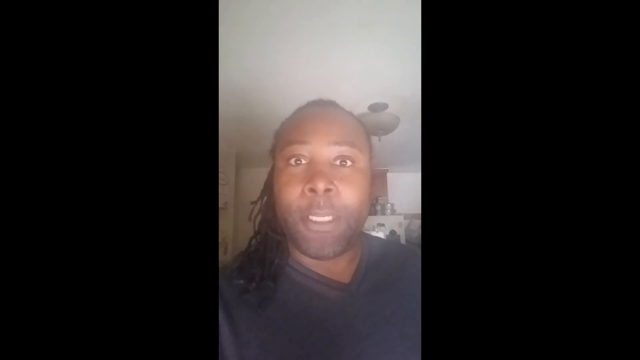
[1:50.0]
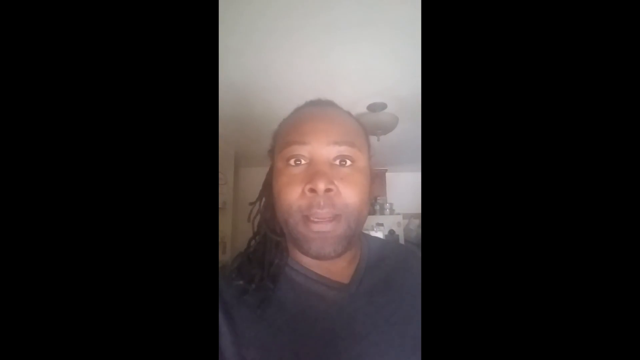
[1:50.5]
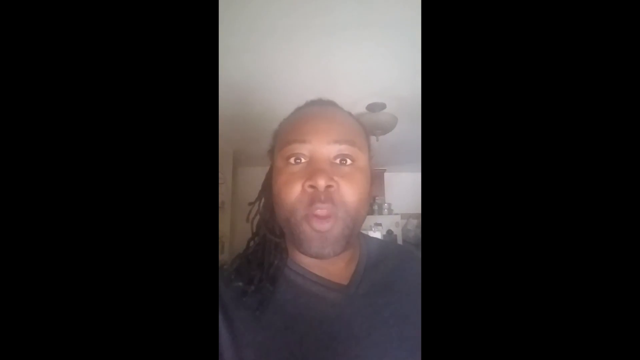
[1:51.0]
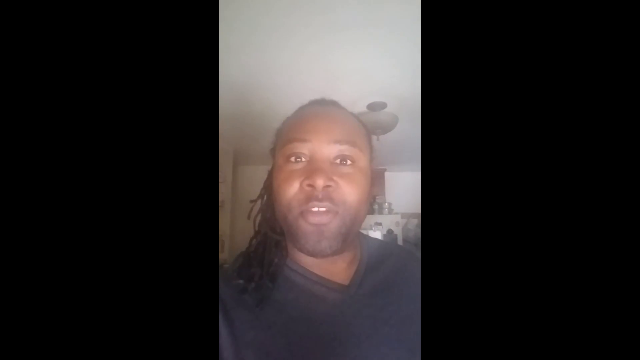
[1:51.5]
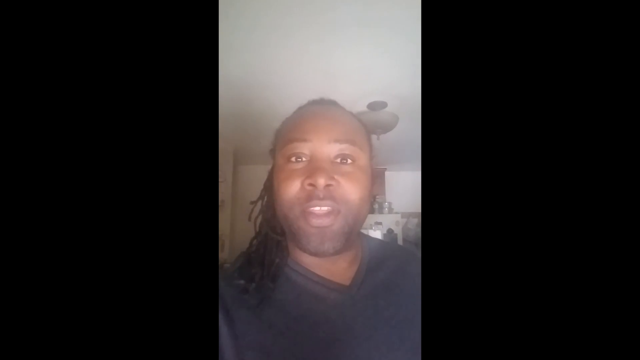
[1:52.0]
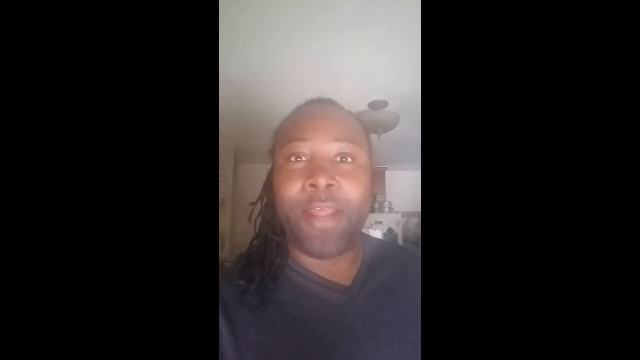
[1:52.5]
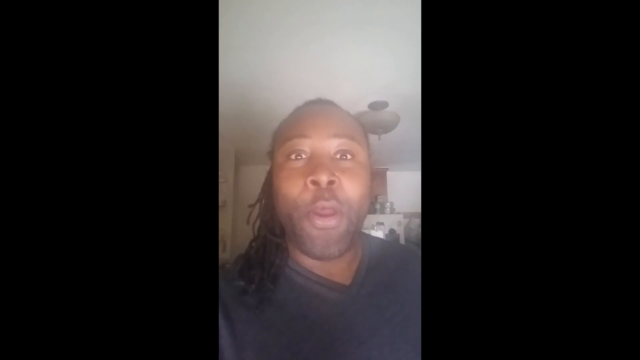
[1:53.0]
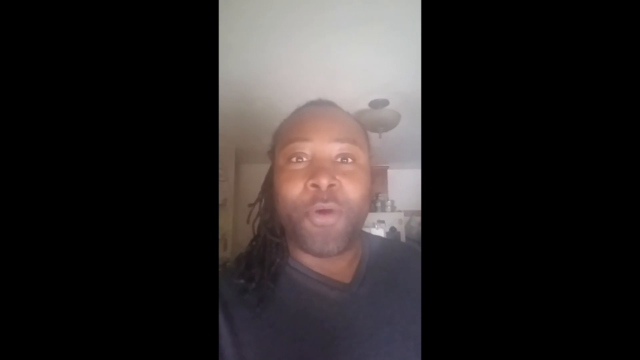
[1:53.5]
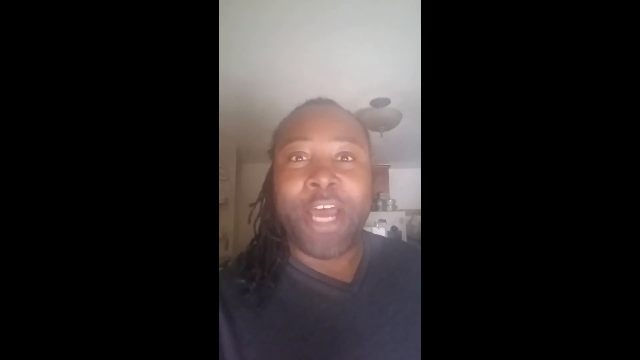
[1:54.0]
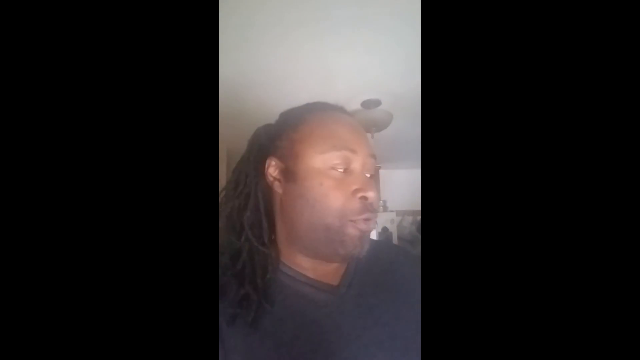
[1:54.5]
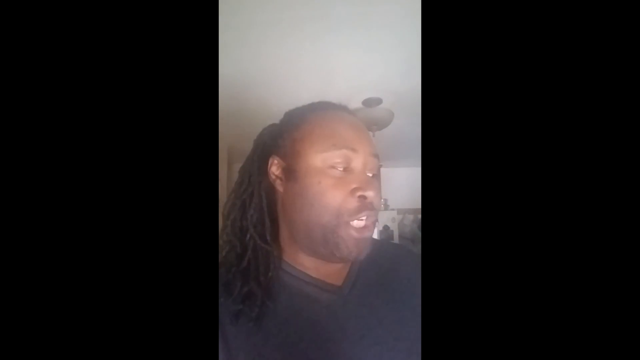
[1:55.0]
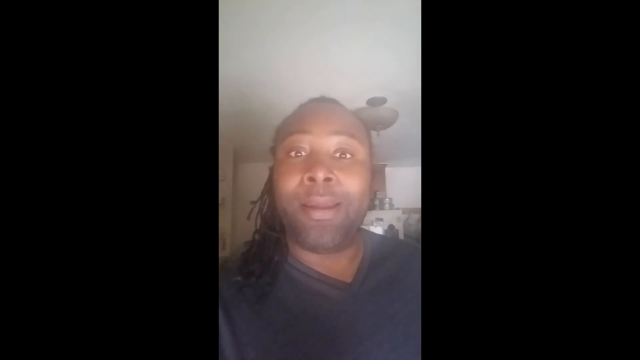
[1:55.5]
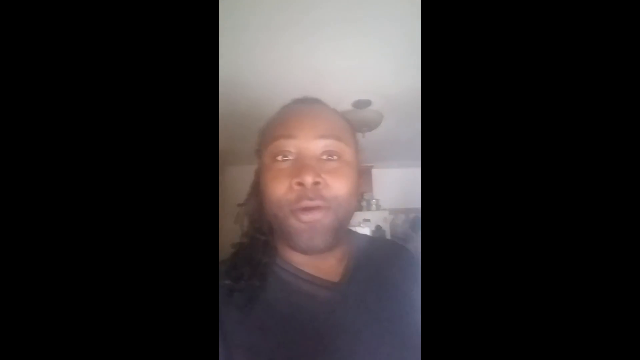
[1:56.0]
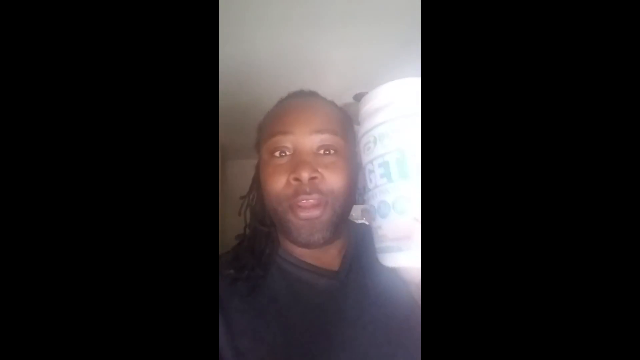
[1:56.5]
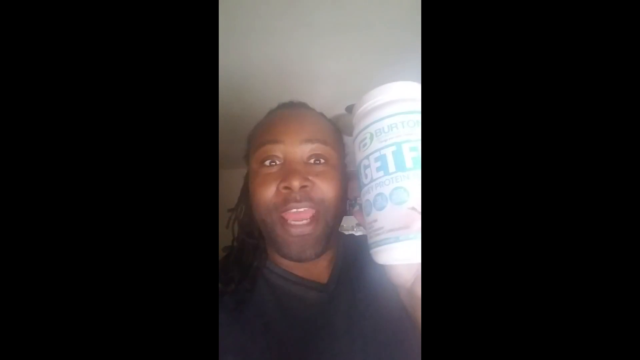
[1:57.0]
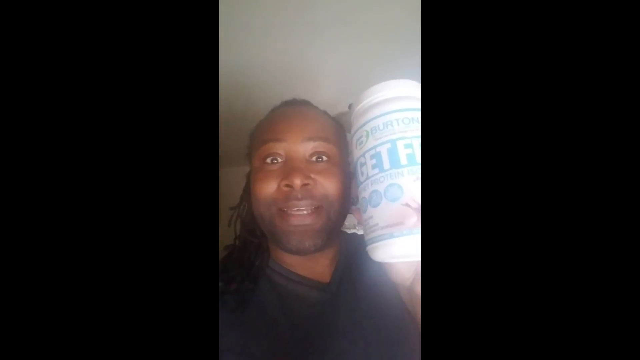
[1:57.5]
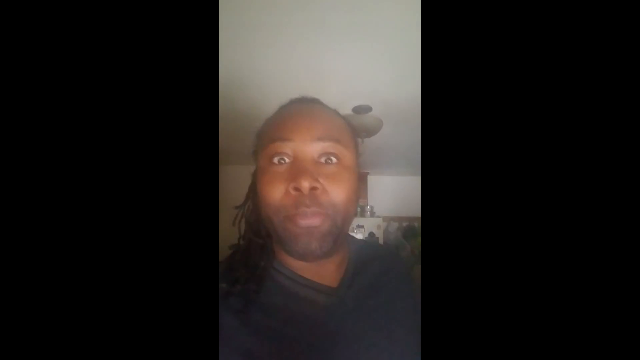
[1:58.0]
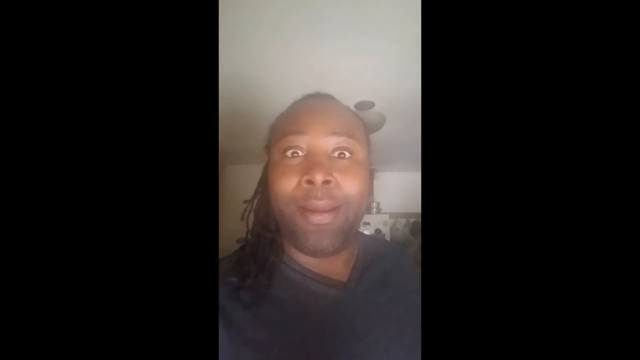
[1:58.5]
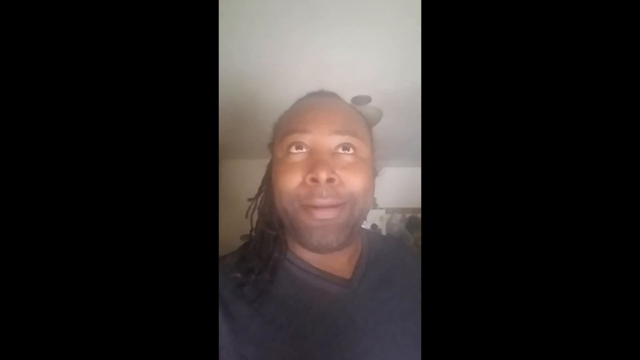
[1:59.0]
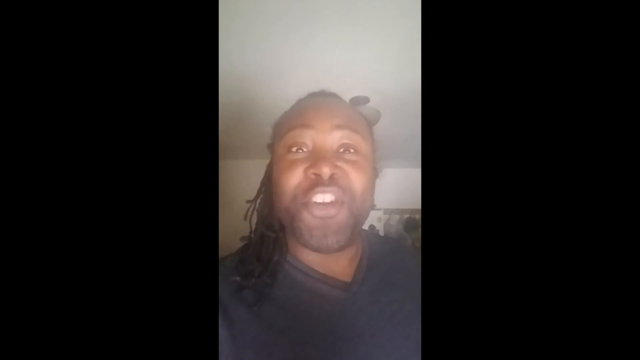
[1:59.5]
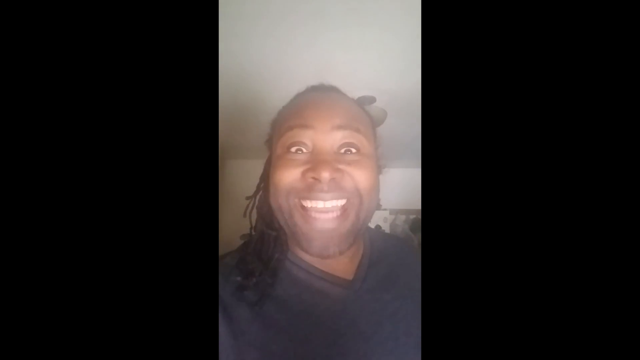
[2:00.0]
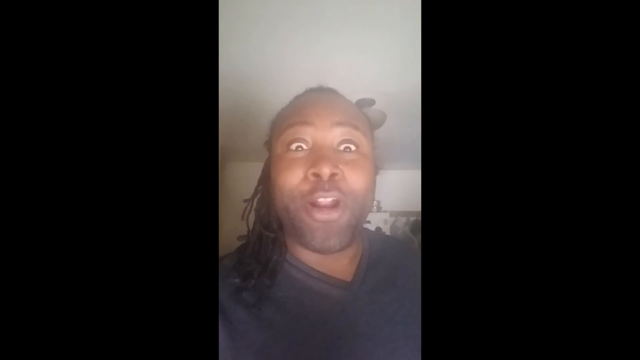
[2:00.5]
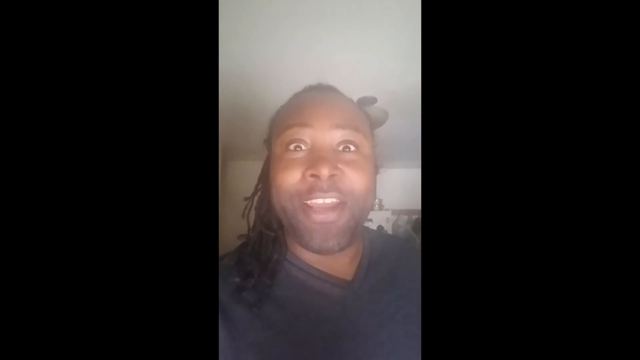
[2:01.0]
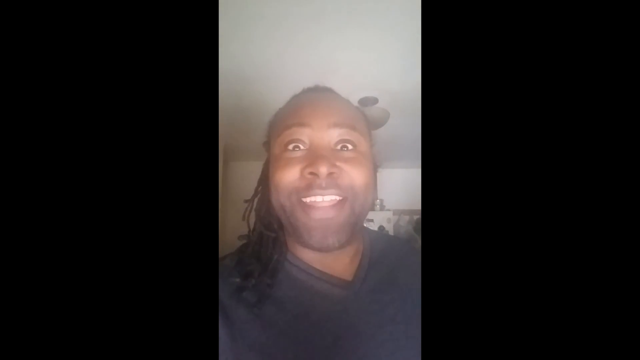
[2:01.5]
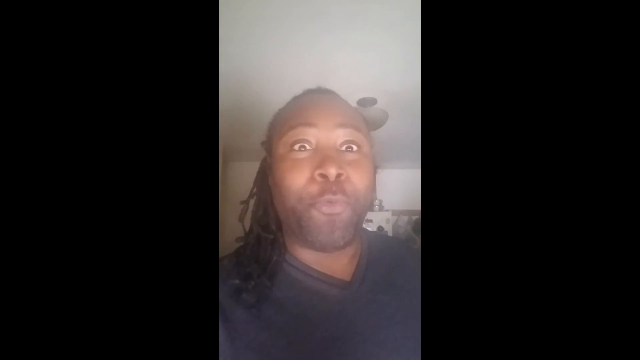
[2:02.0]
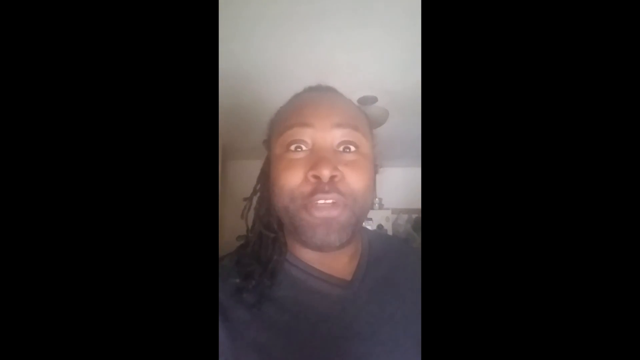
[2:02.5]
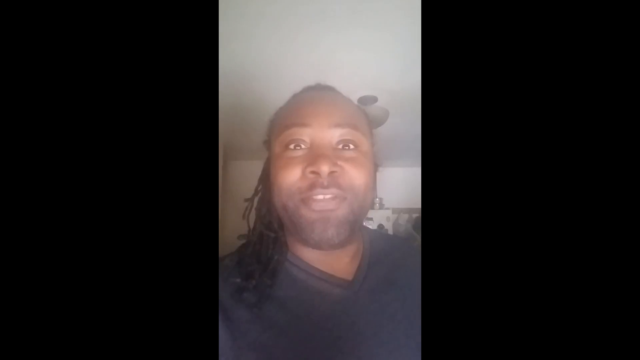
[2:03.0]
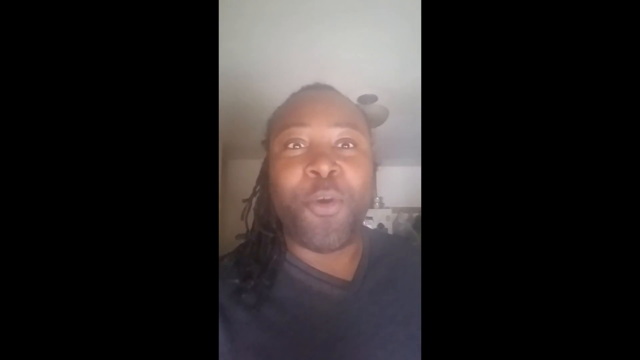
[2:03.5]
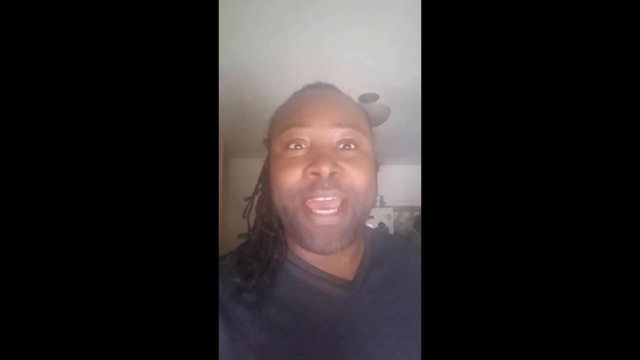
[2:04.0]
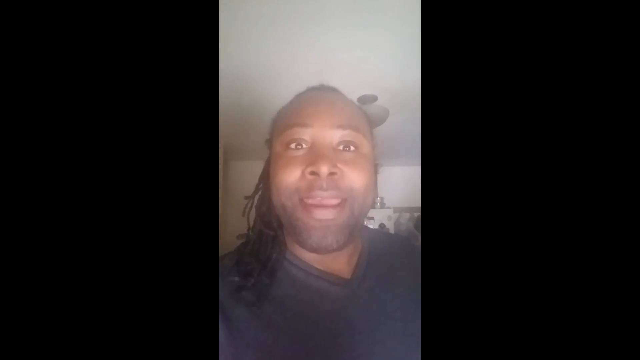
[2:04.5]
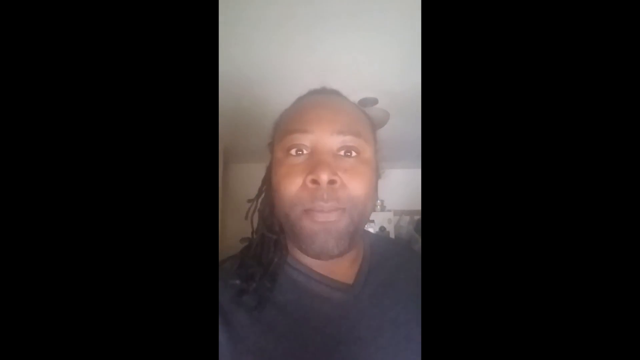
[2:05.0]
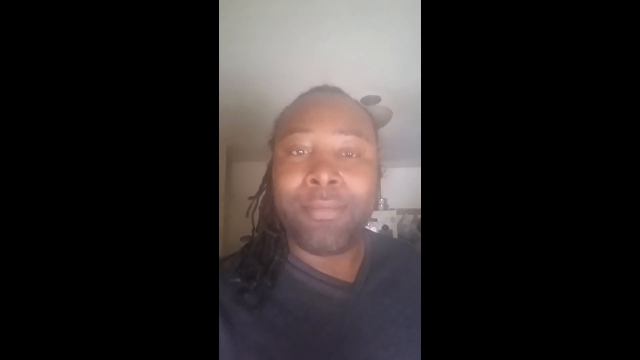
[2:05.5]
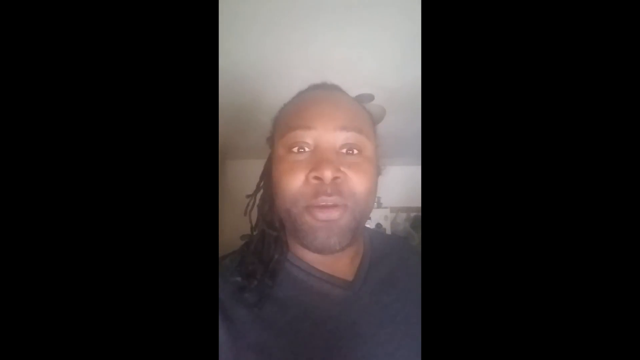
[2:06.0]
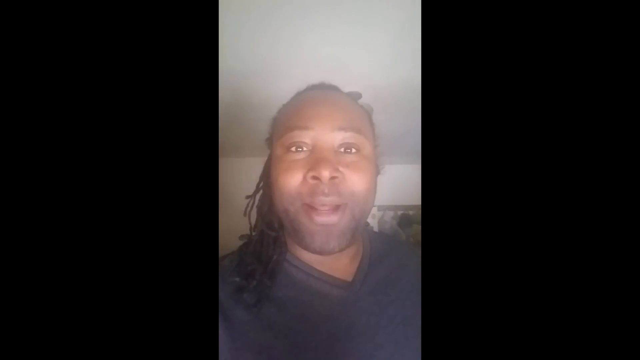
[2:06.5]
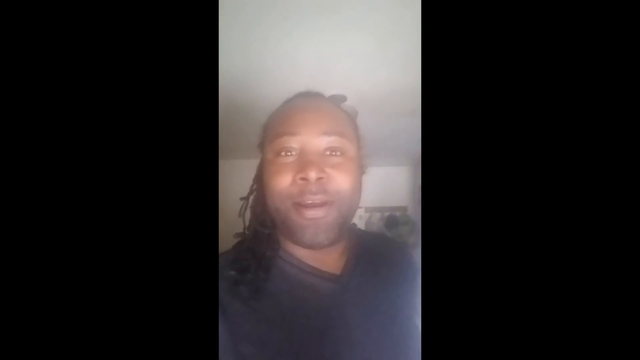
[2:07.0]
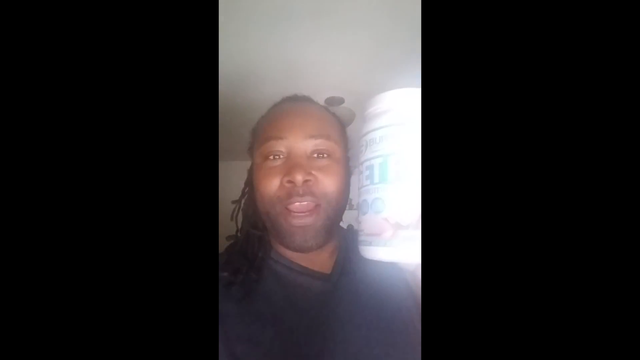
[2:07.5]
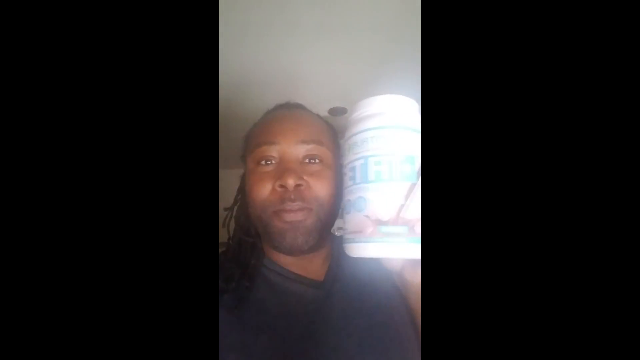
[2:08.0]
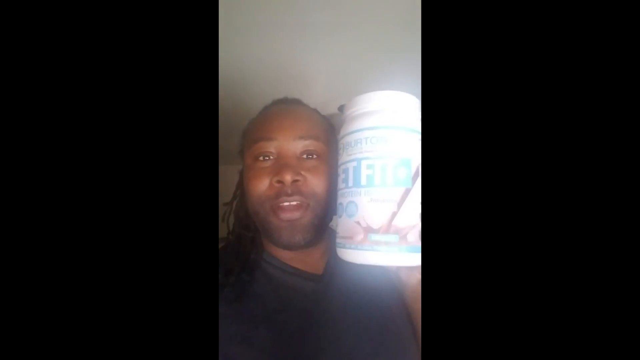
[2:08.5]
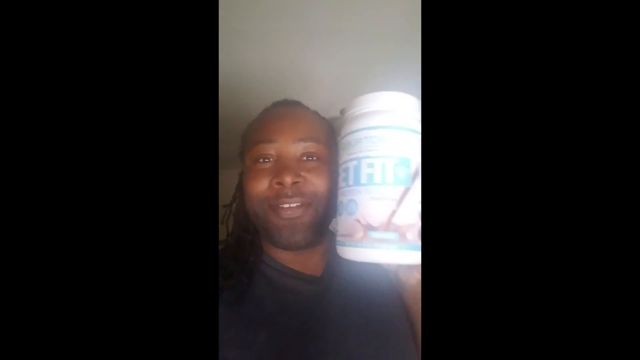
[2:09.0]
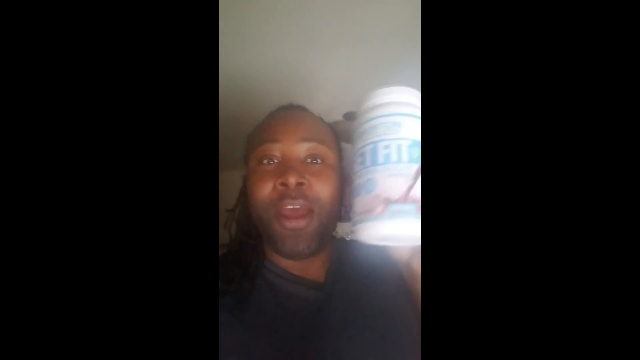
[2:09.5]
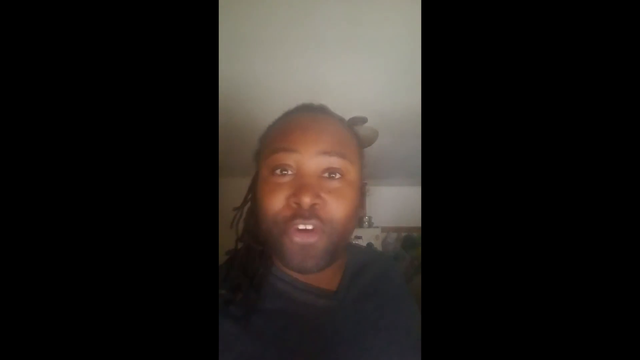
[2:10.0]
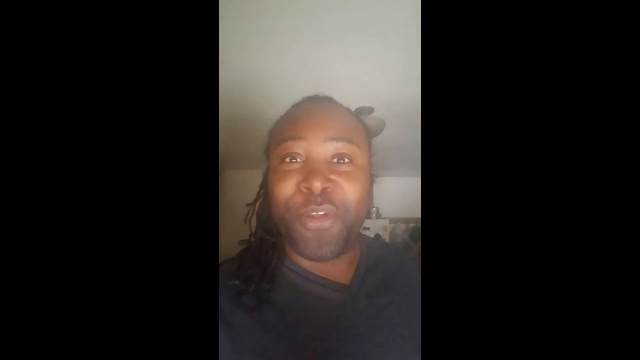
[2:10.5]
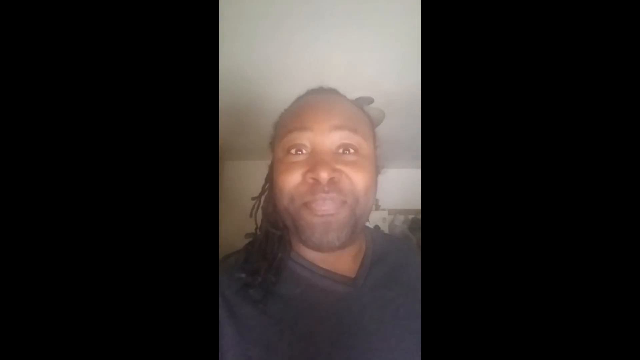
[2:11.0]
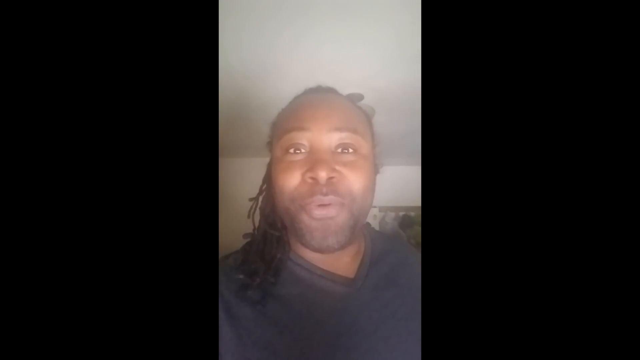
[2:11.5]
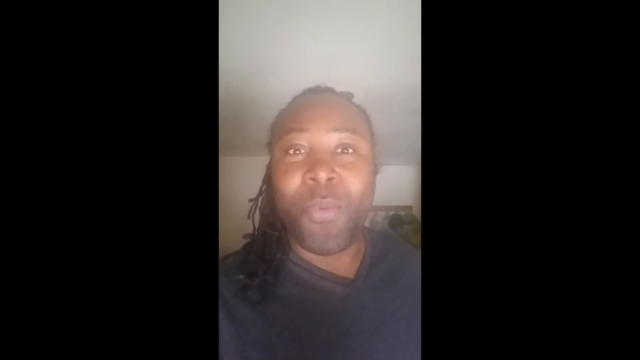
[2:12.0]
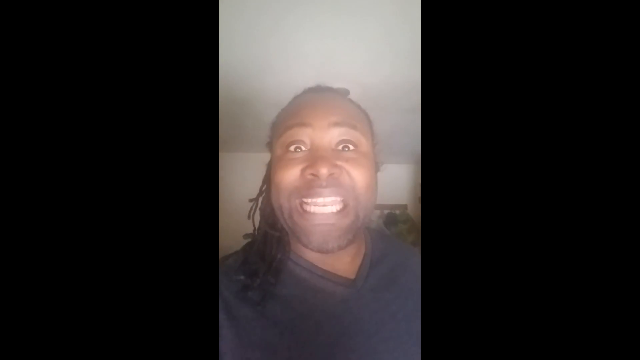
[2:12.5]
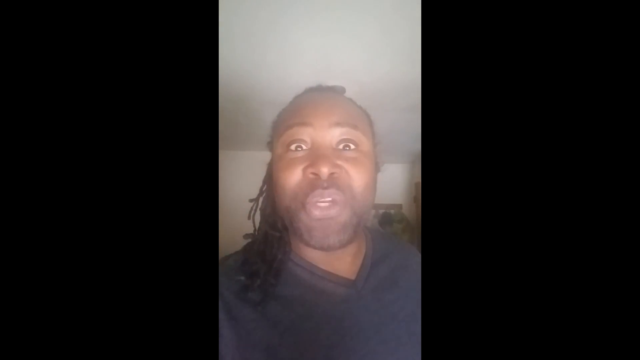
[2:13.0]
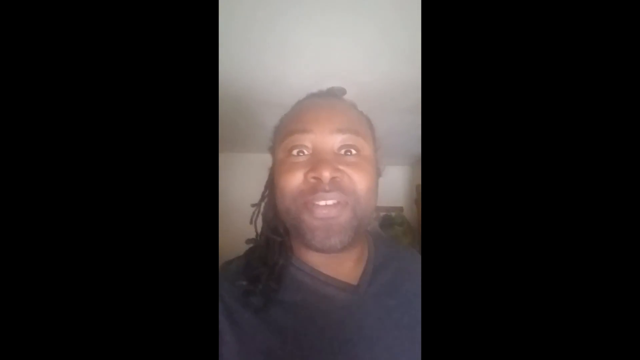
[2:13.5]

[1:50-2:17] The man talks straight to the camera in the room. He looks over to the left and brings the canister of Get Fit into view. He keeps talking to the camera, seemingly very passionately, and again pulls the canister into view as he talks. The room has a white ceiling and white background, with the light on the ceiling visible. He wears a blue shirt that forms a V on his chest. The setting does not change much; he talks directly to the camera while holding up the canister. The video then goes to a completely black screen.